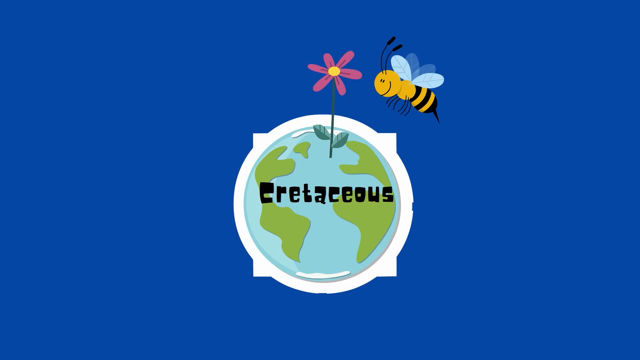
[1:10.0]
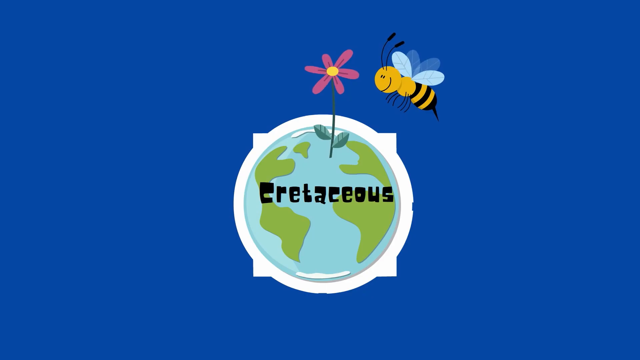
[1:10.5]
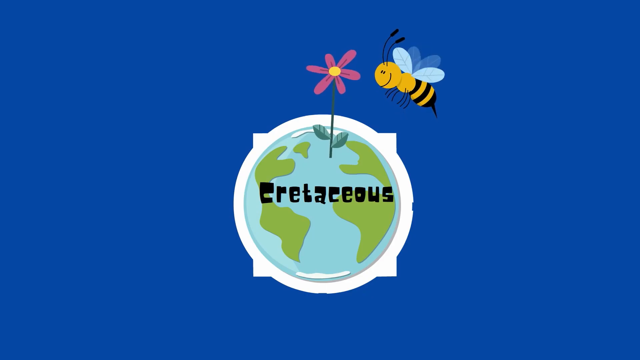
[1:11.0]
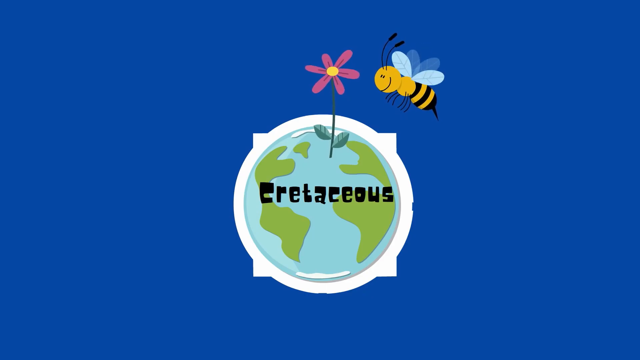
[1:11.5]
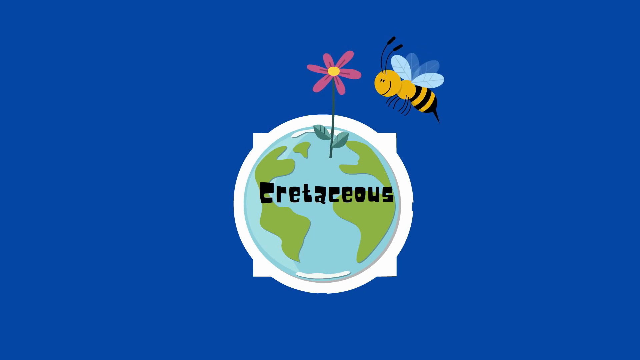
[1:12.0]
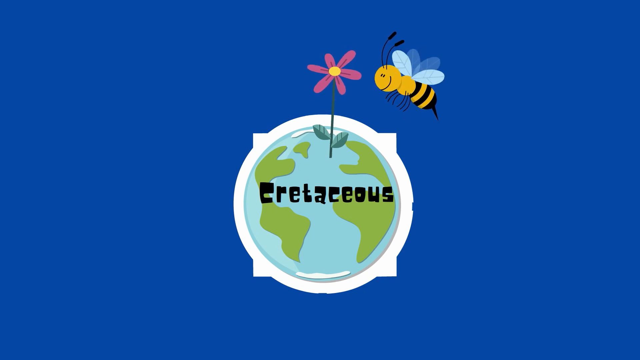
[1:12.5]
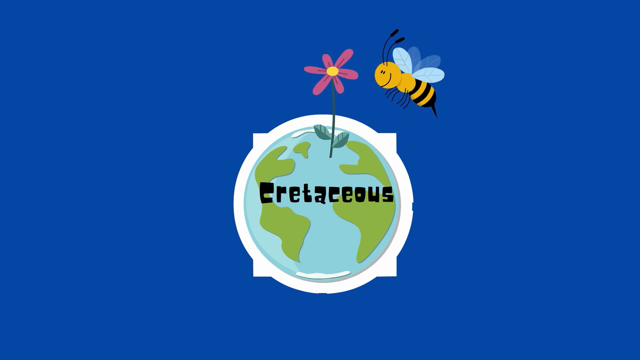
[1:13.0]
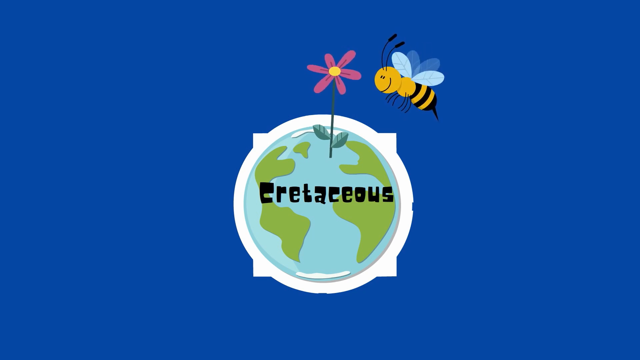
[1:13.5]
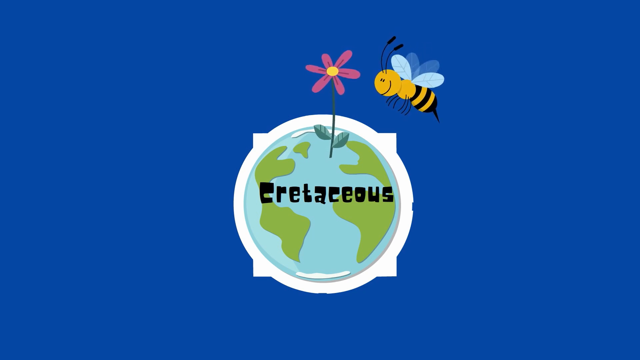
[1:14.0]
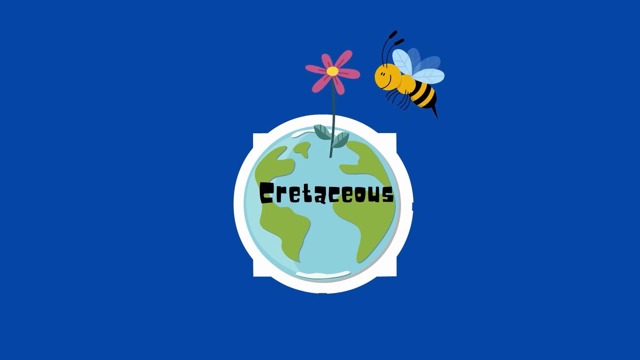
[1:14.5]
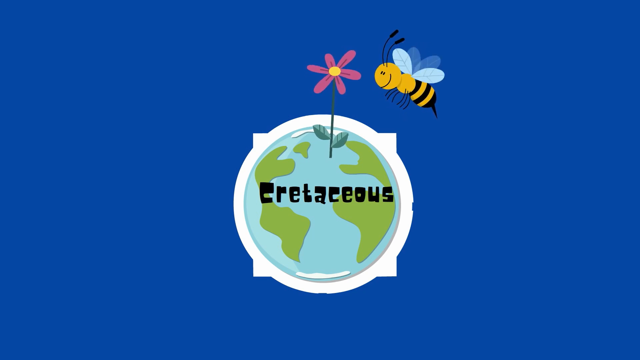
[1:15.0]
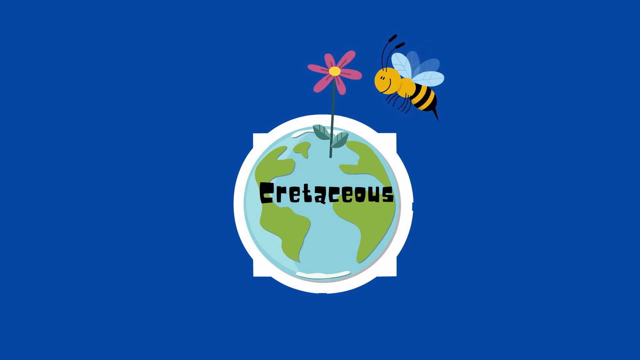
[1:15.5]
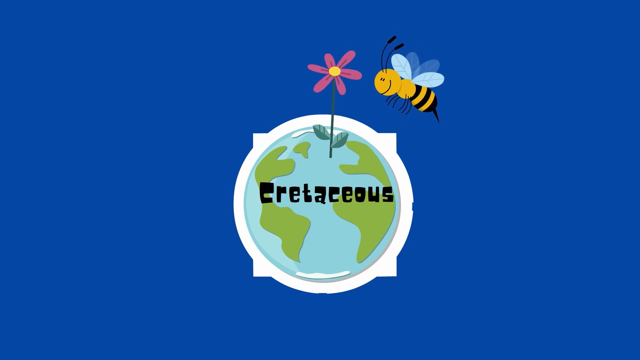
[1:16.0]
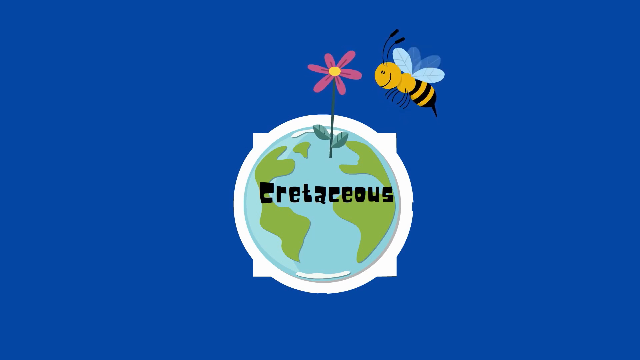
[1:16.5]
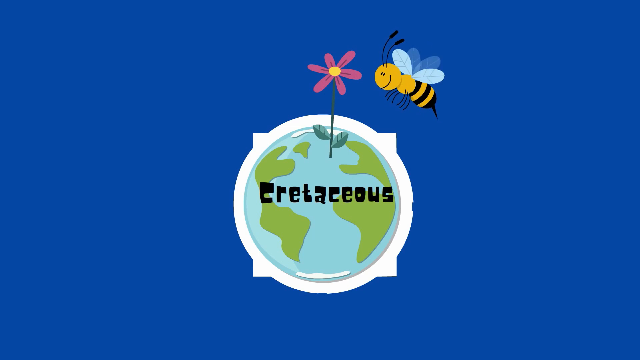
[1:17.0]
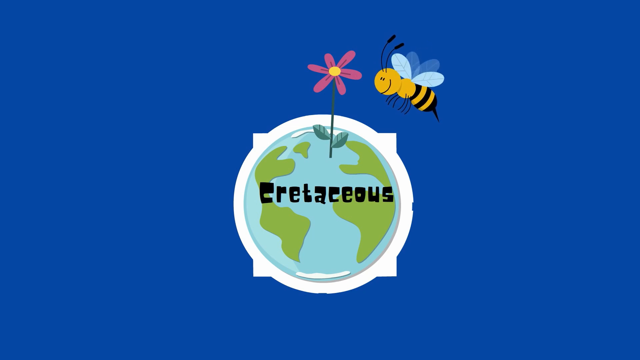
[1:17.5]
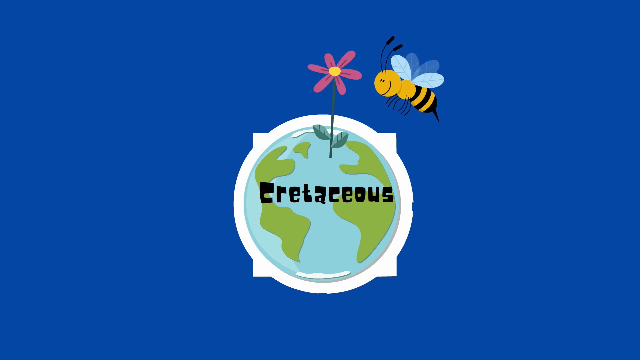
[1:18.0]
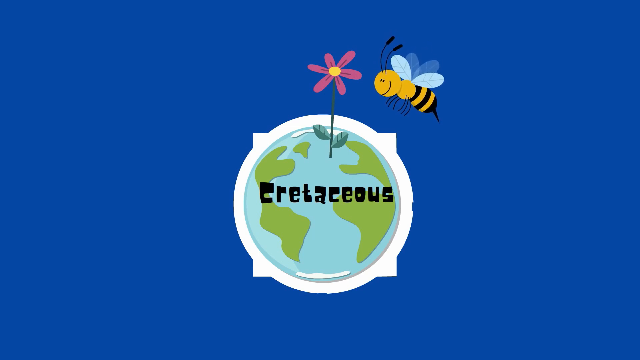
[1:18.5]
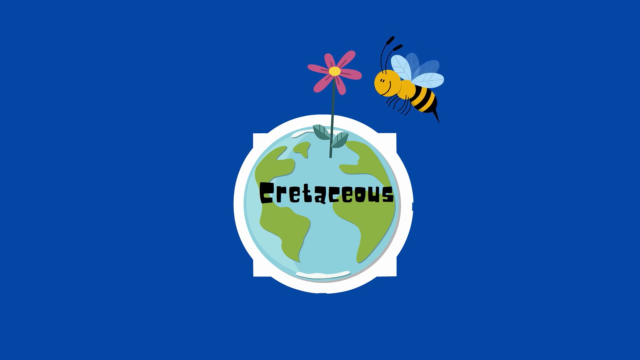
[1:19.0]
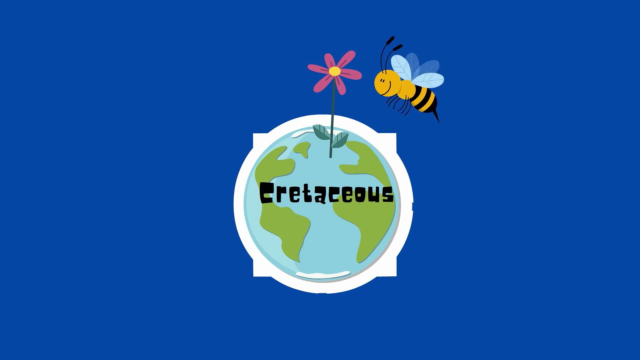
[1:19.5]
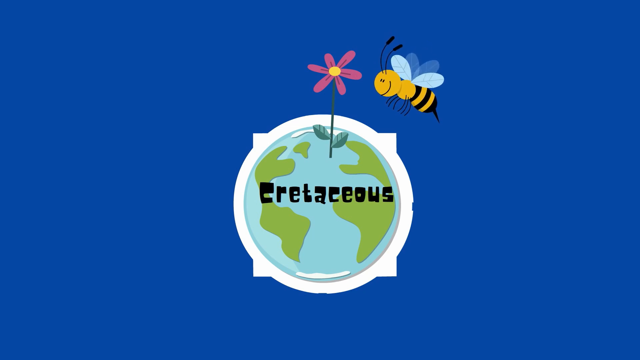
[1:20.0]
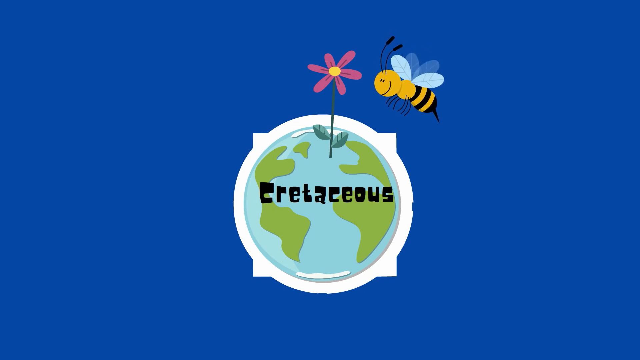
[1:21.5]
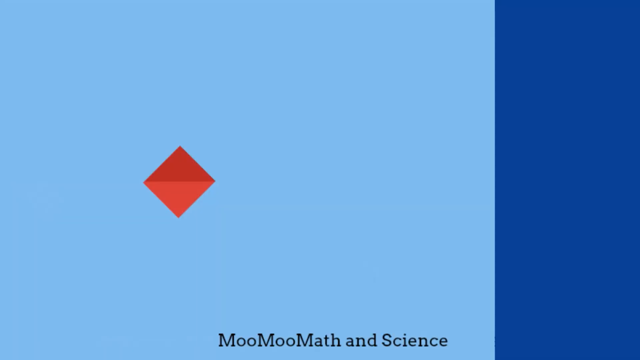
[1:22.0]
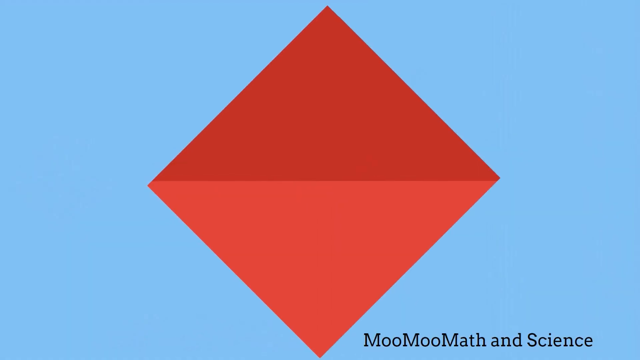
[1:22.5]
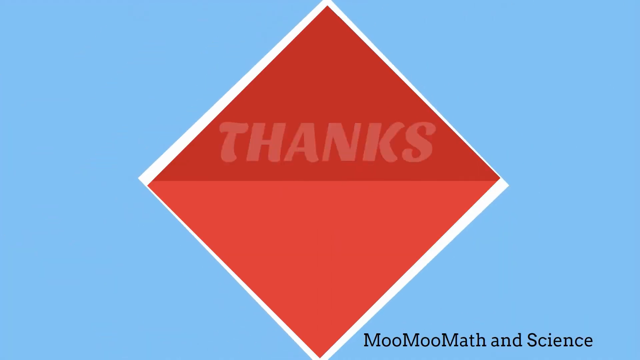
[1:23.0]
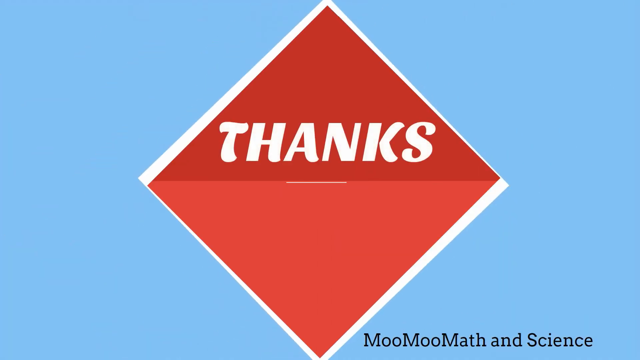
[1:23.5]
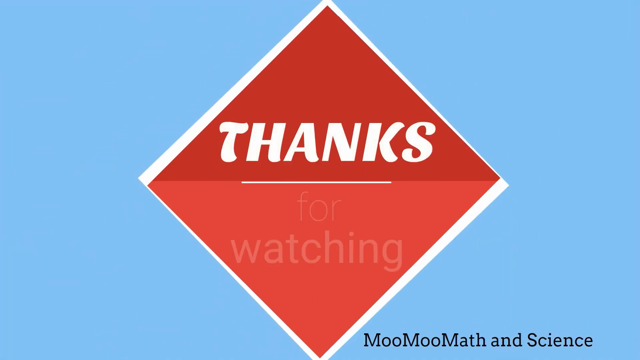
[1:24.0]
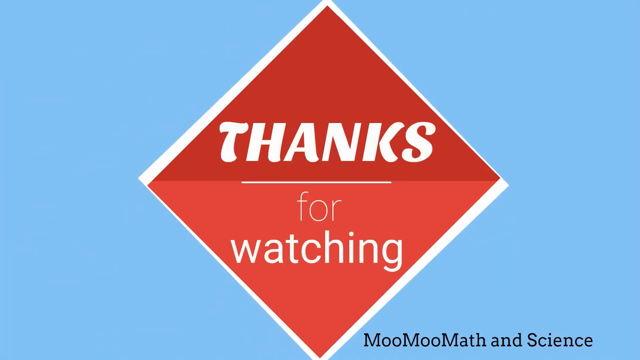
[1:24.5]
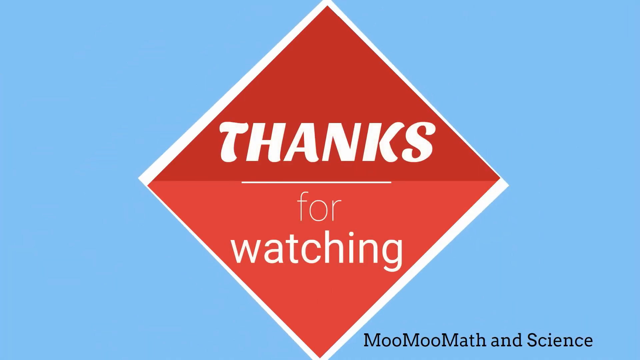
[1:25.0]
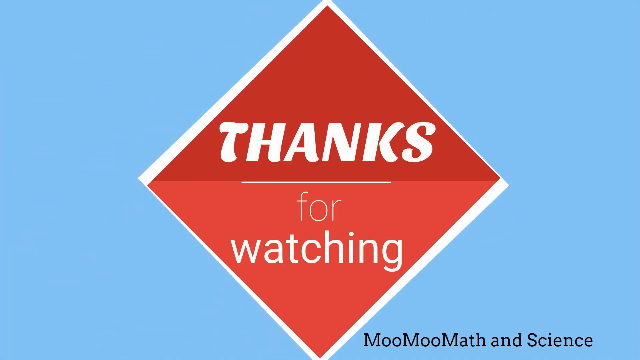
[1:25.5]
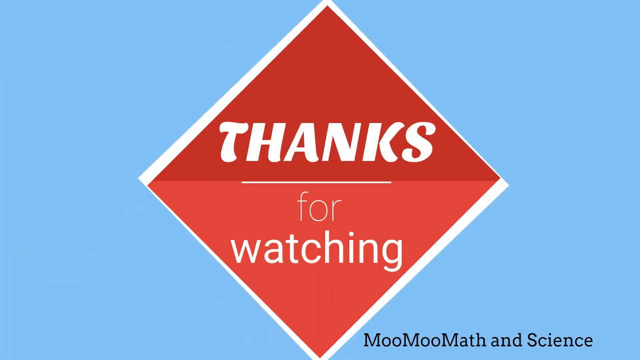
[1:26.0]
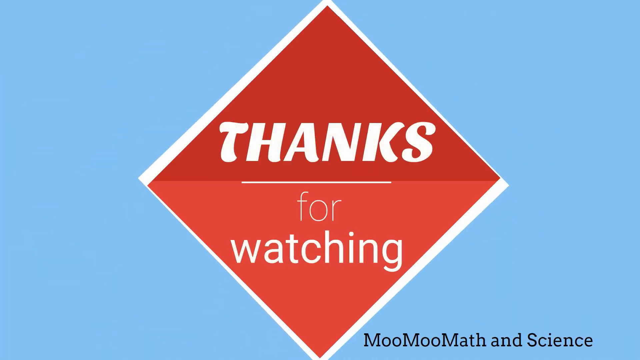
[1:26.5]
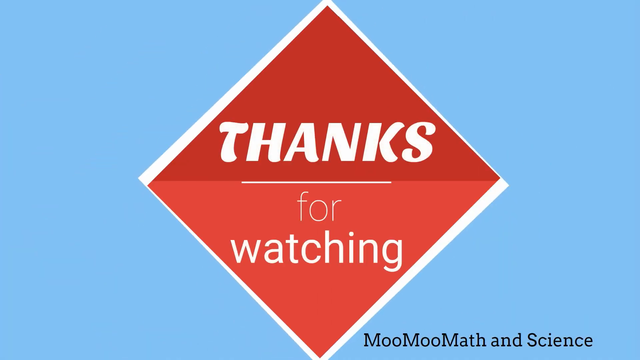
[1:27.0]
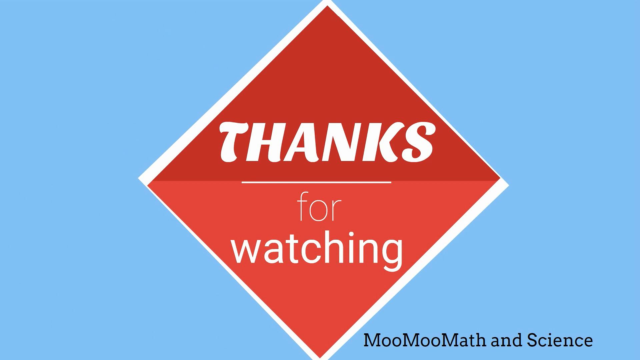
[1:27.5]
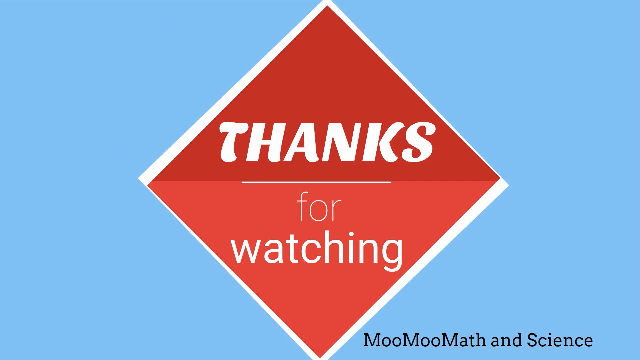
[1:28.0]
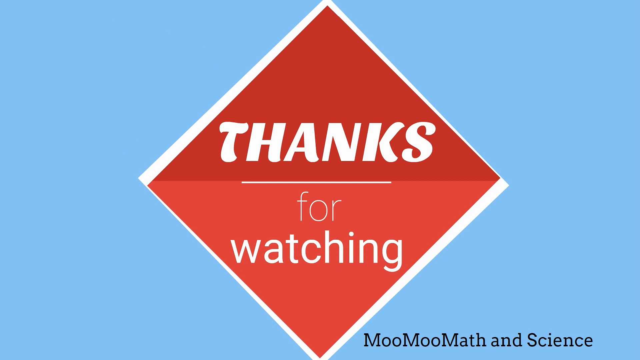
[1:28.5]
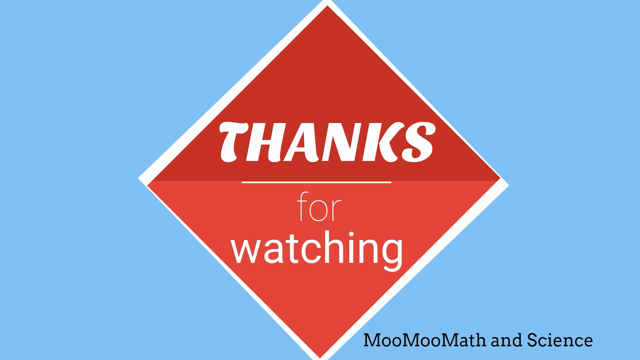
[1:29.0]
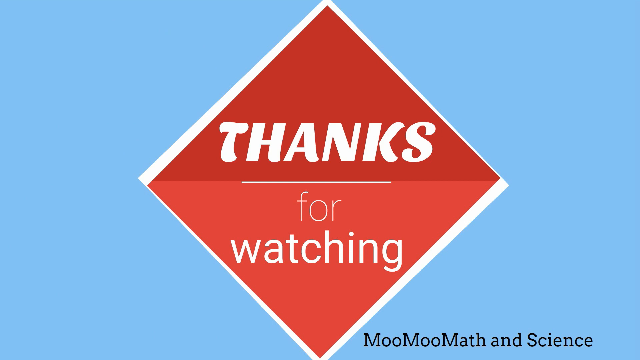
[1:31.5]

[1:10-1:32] The planet is around some kind of white-looking mark against a blue background, and a flower comes out of the planet. The planet is in the Cretaceous period, and the flower blooms while the bee is sort of flying and moving its wings. The image changes to two red diamonds and two white diamonds that come together to form some kind of logo. The word "THANKS" appears, followed by the words "FOR WATCHING", leaving a logo with the words "THANKS FOR WATCHING". At the bottom of the video, the letters "MooMoo Math and Science" appear against the blue background; they seem to have made the video.